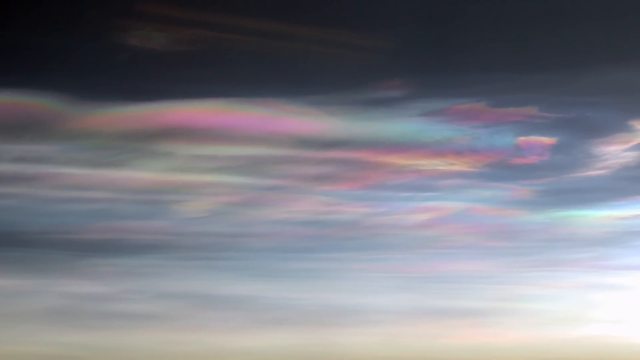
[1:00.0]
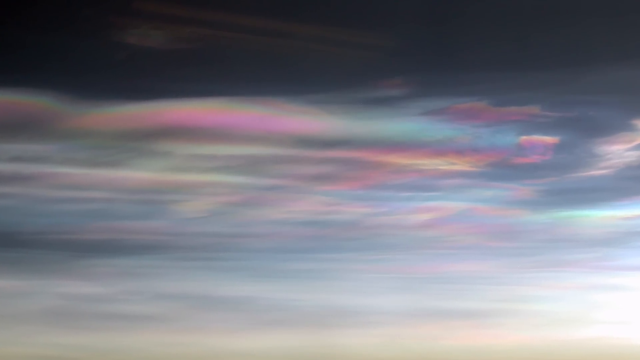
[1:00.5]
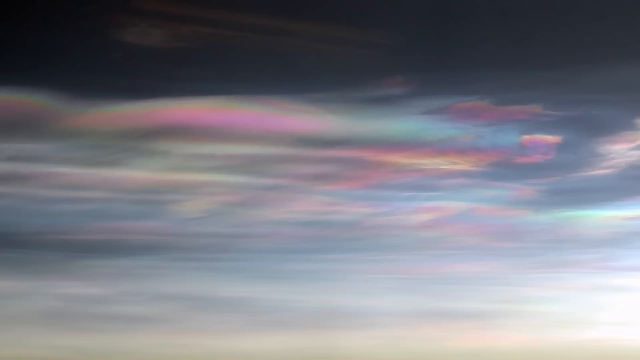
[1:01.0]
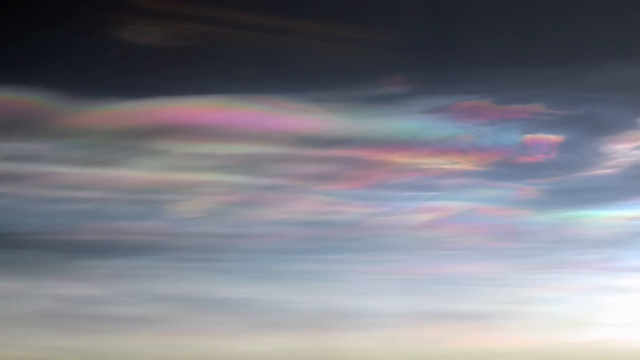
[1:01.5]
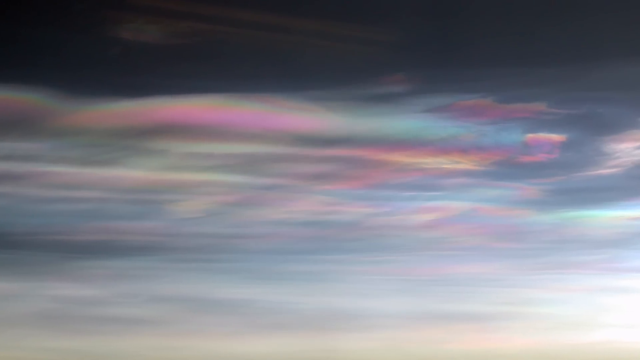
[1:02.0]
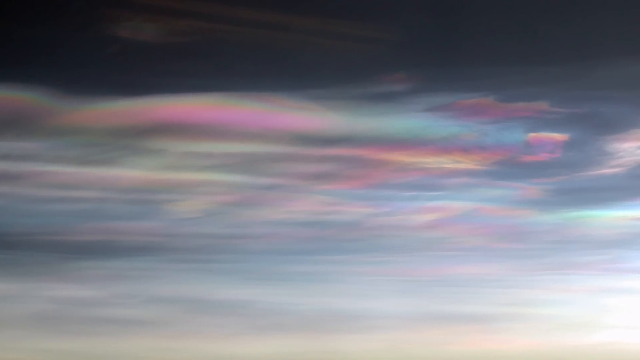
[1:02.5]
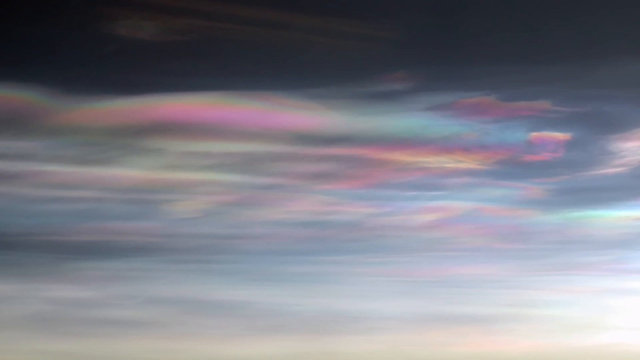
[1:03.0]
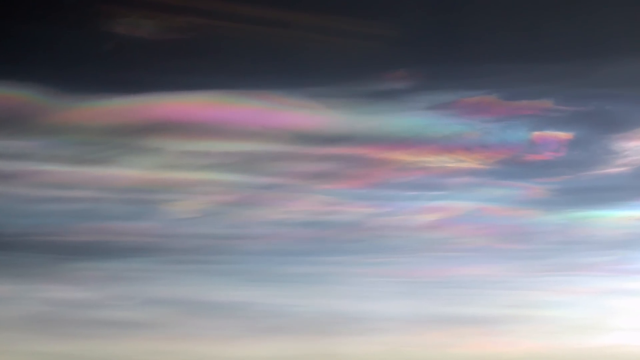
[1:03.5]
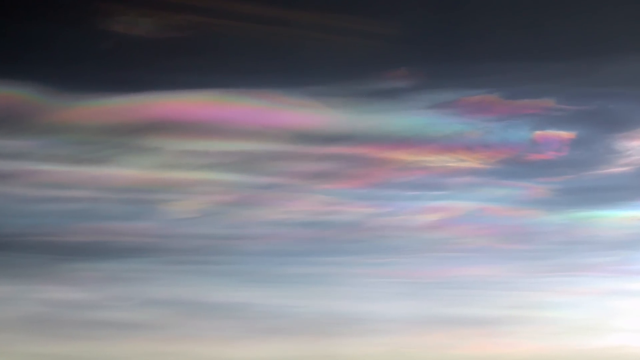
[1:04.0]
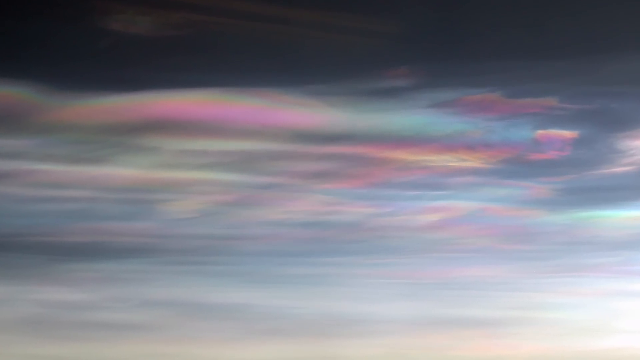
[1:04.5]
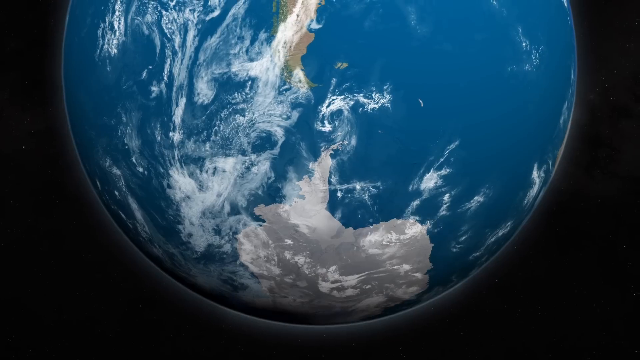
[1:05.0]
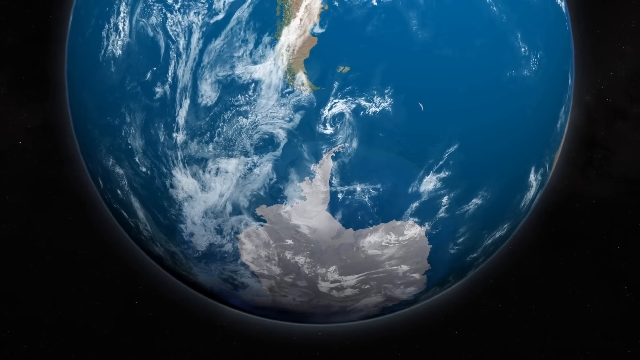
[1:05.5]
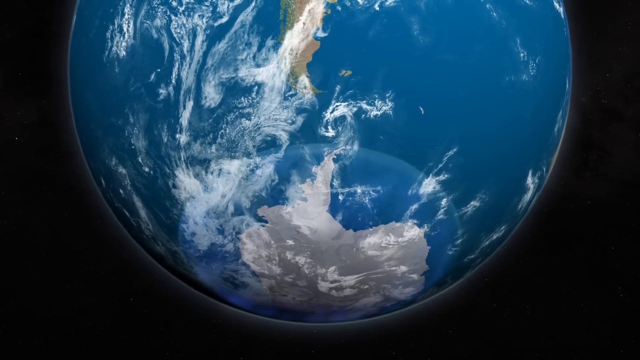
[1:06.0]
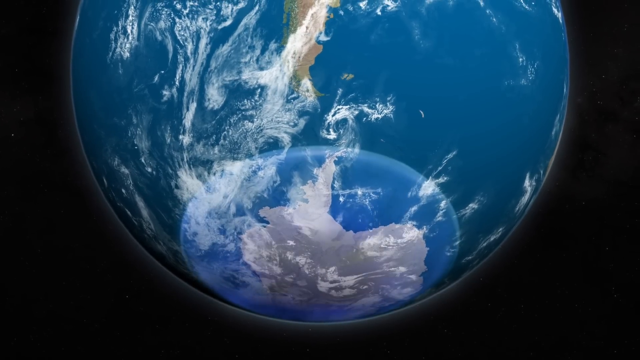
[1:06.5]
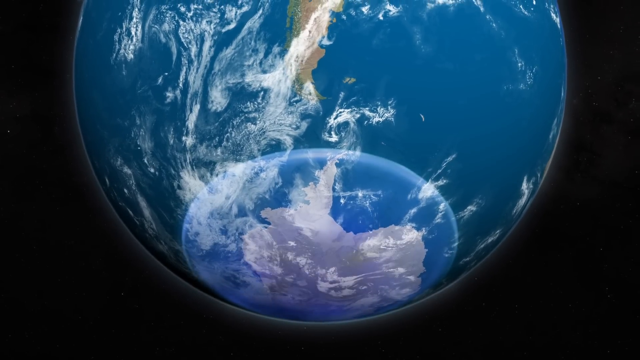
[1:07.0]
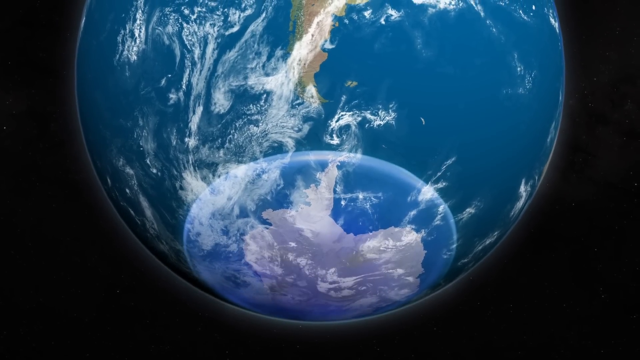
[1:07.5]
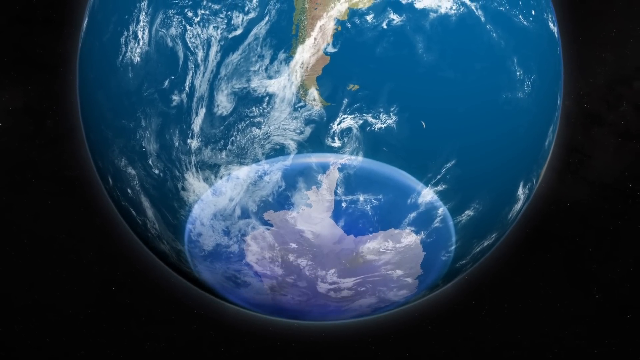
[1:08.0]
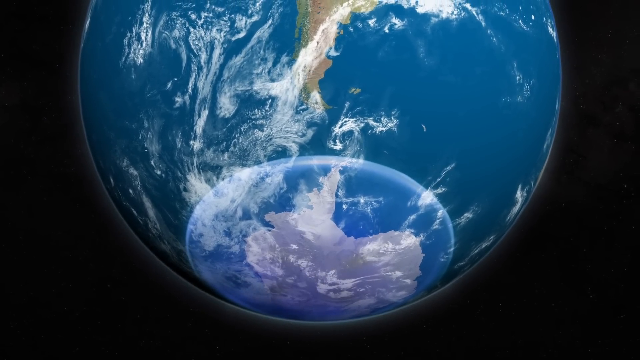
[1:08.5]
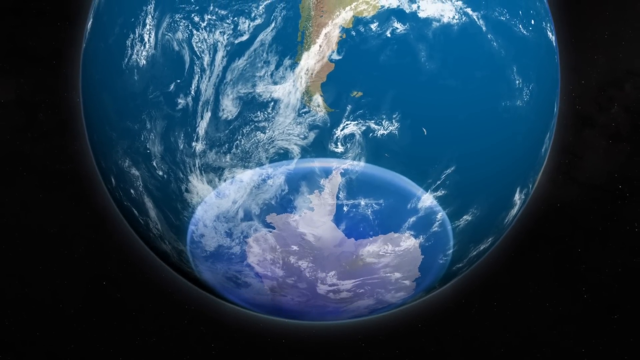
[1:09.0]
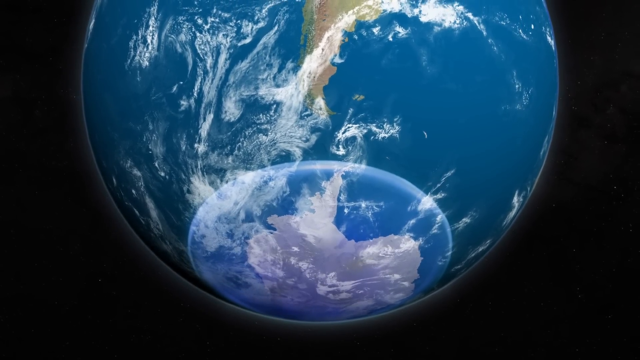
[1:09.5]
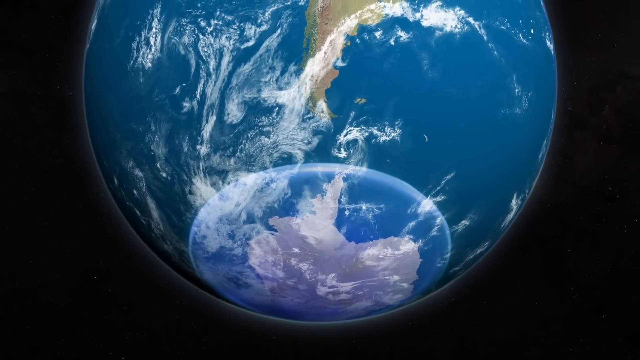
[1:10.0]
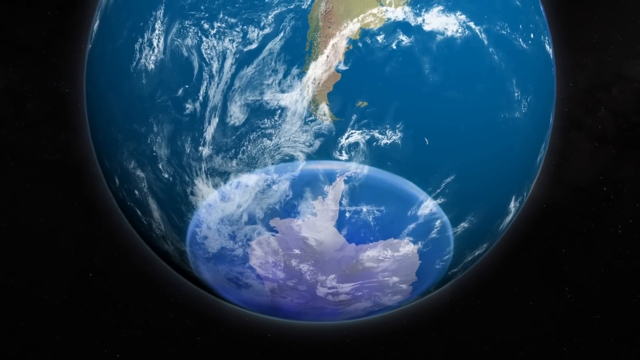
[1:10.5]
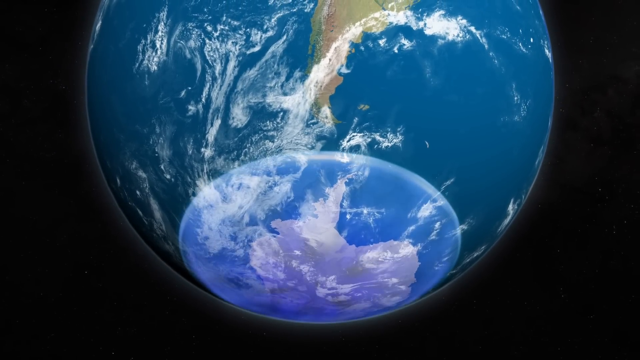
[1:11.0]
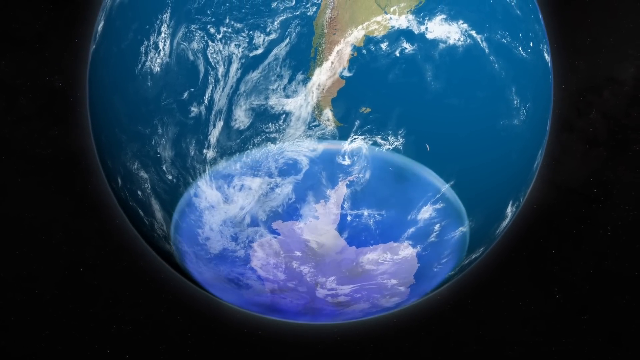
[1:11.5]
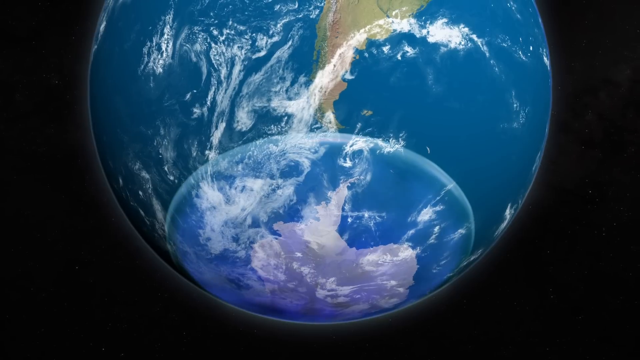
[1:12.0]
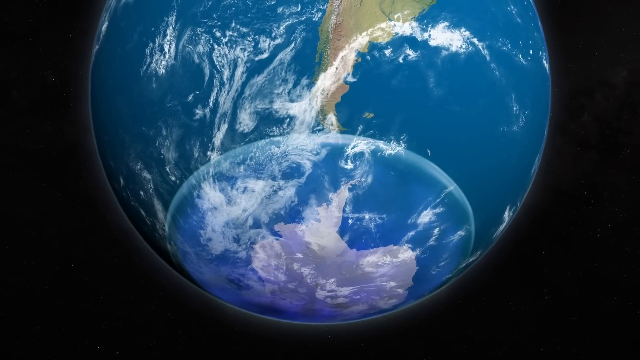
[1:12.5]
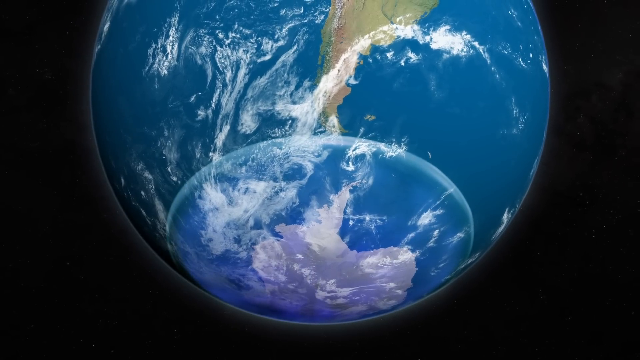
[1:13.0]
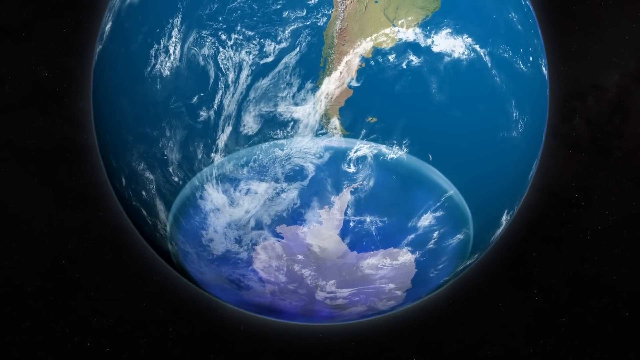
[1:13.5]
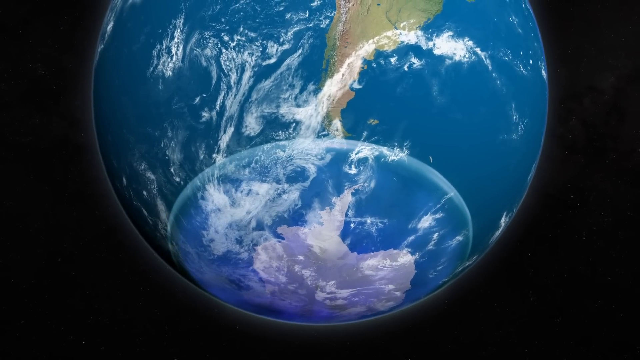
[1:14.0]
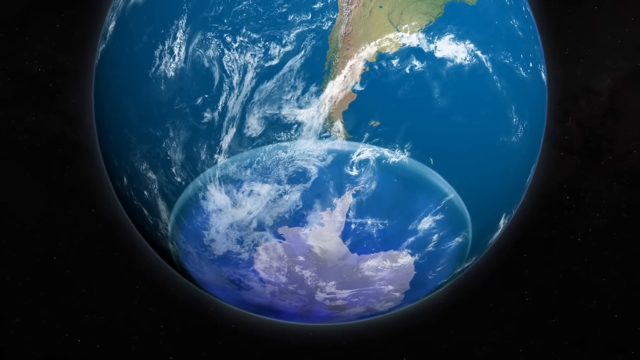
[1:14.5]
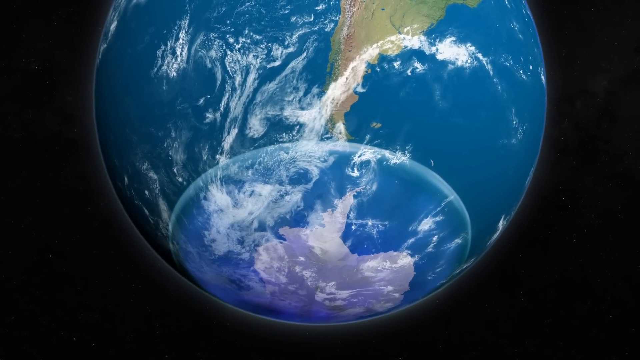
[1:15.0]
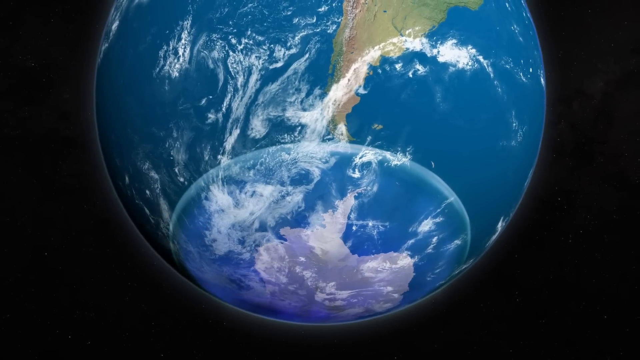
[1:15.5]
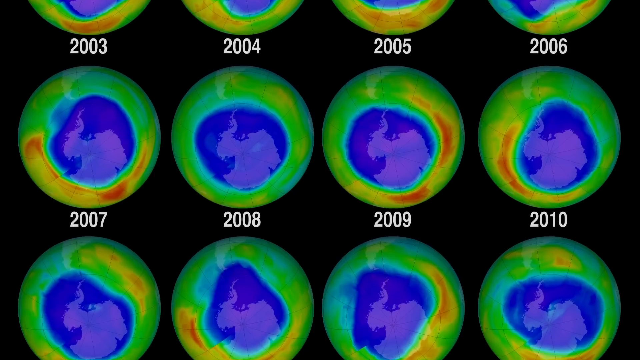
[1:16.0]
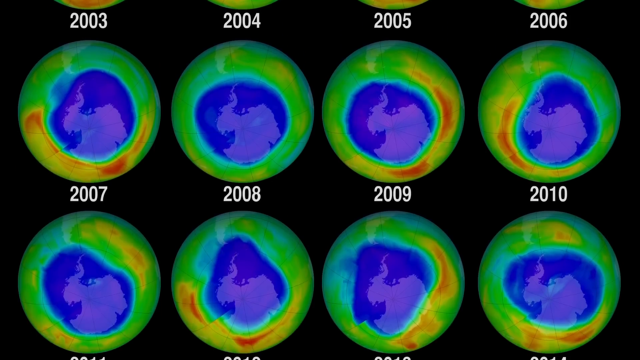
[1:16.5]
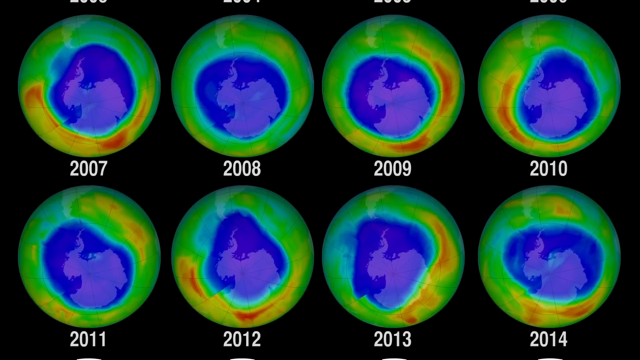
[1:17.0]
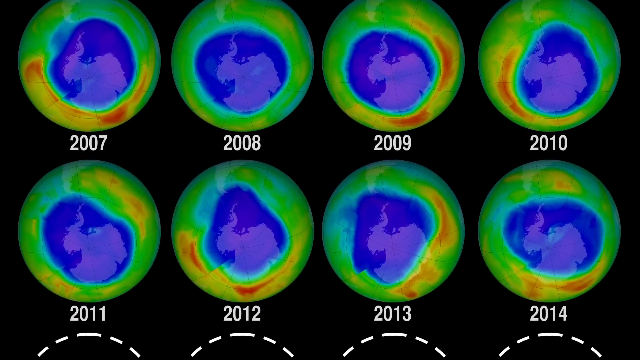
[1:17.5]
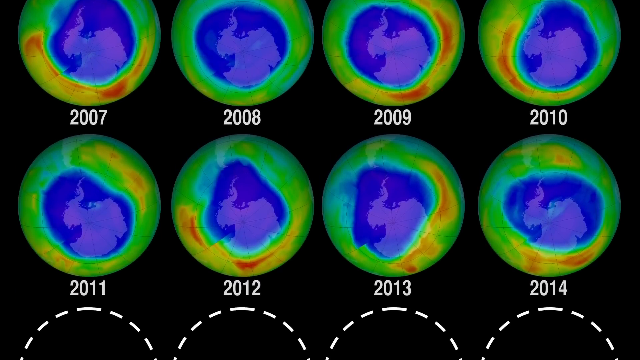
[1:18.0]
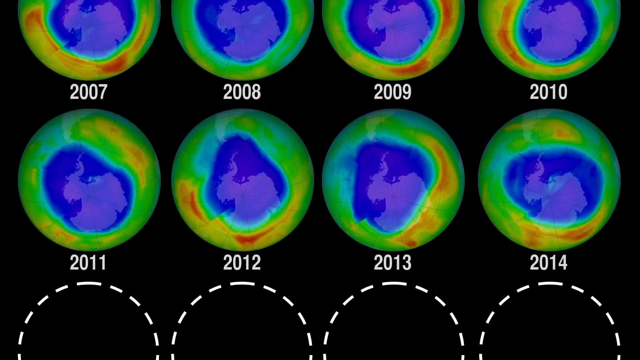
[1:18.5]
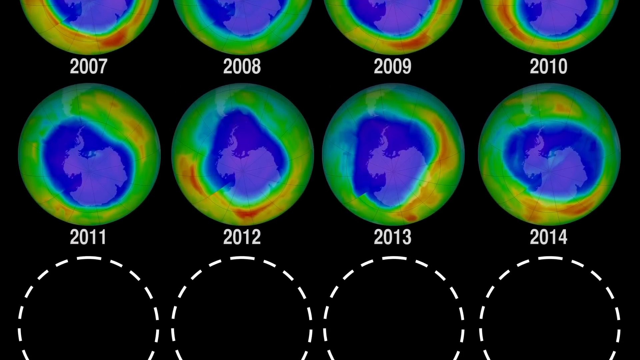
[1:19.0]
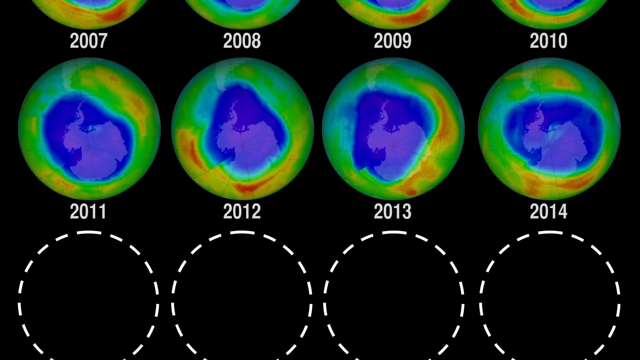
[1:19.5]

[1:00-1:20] Skies with an iridescent pink, blue and yellow color appear as the camera slowly zooms in. Then Earth is shown up close in blue and white, with some patches of gray. Another circle of blue seems to come up at the bottom of Earth, growing darker, then slowly expands and gets brighter before dimming a bit, while Earth still seems to move with it. Then a series of green circles with splotches of other colors such as purple, orange and yellow appears, dated 2003, 2004, 2005, 2006, 2007, 2008, 2009, 2010, 2011, 2012, 2013 and 2014, followed by empty circles with white dashed lines around the edges.